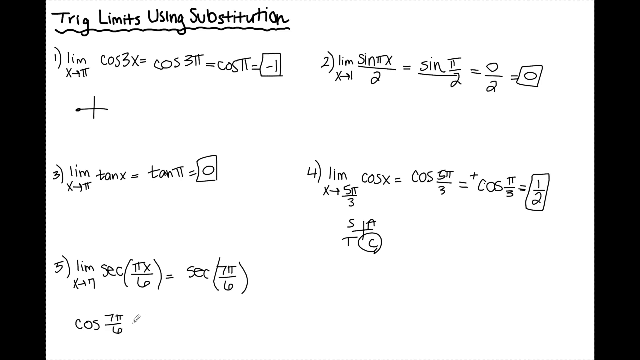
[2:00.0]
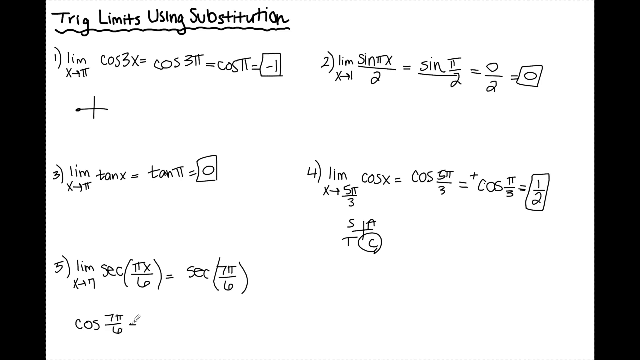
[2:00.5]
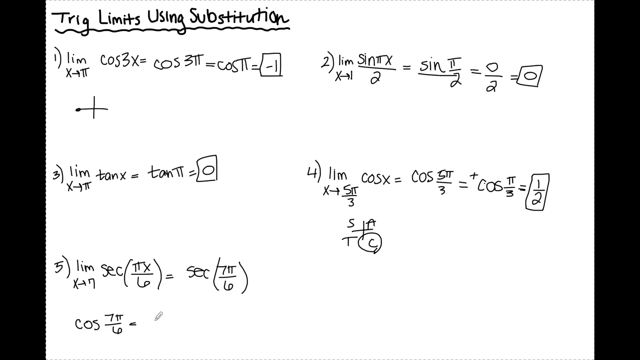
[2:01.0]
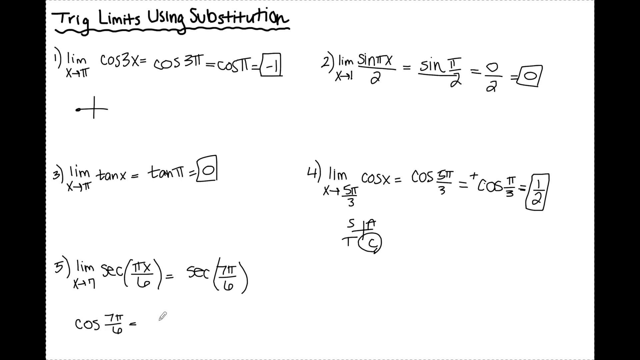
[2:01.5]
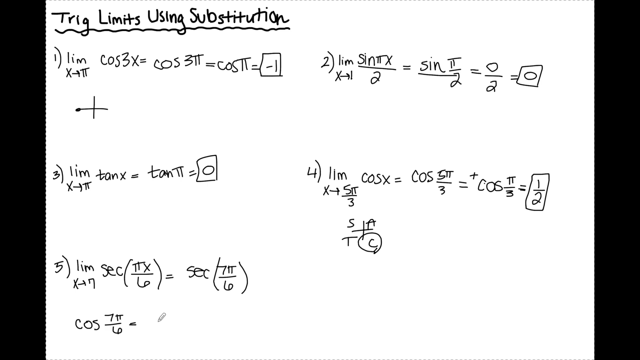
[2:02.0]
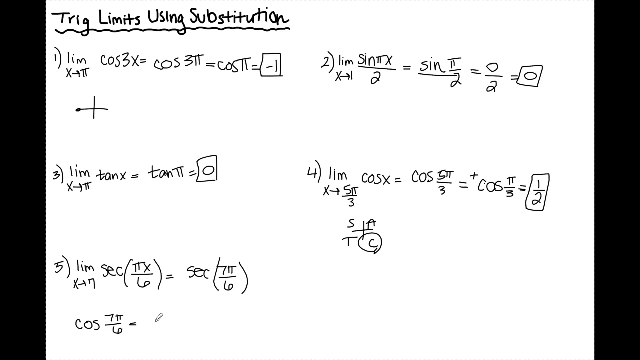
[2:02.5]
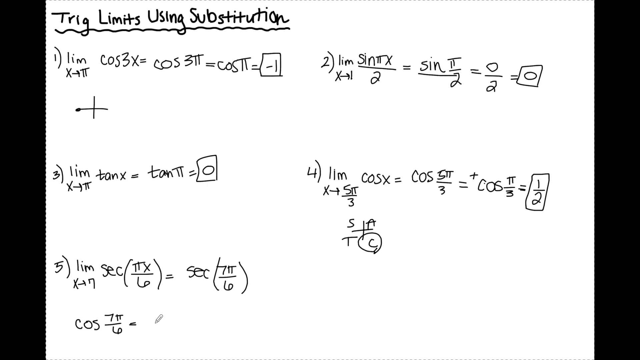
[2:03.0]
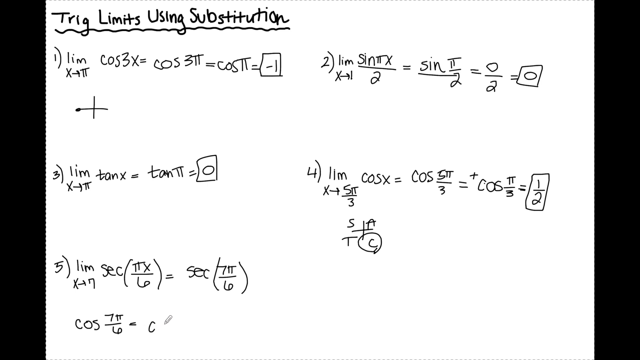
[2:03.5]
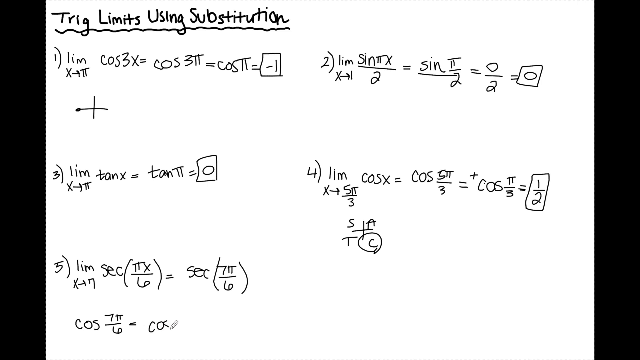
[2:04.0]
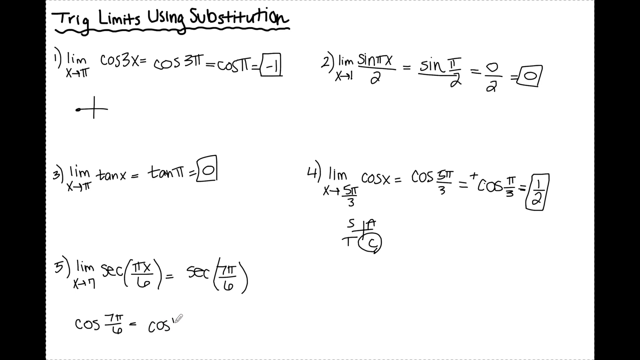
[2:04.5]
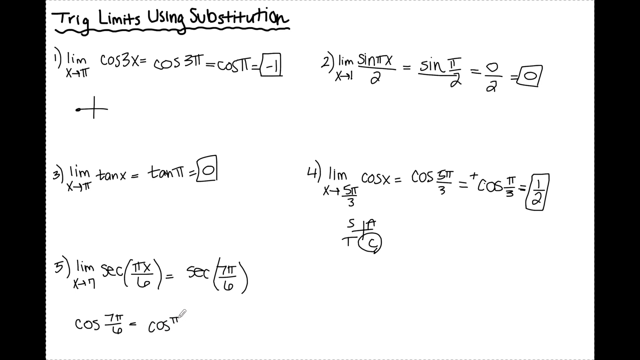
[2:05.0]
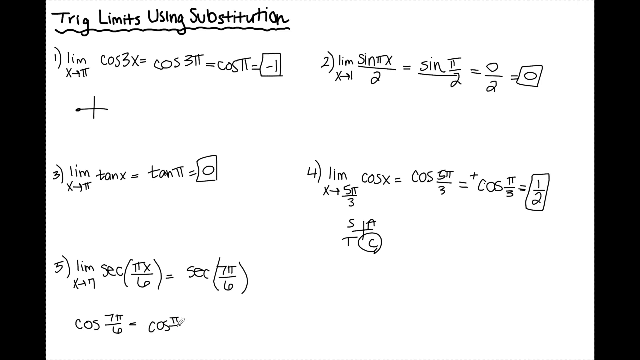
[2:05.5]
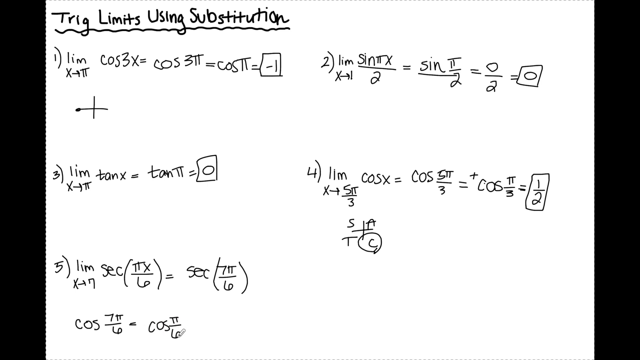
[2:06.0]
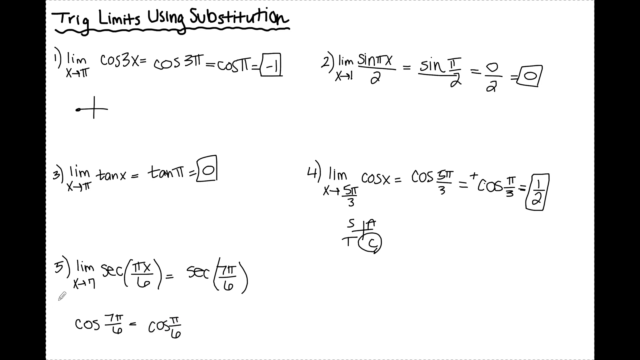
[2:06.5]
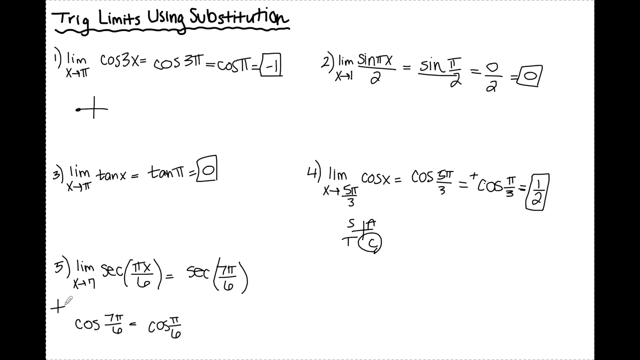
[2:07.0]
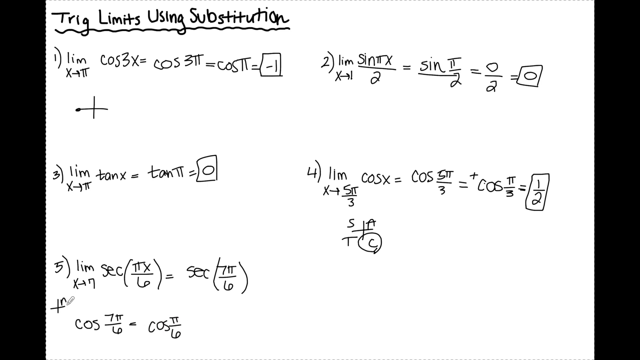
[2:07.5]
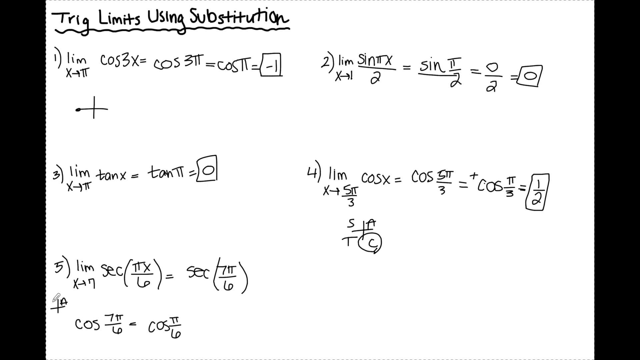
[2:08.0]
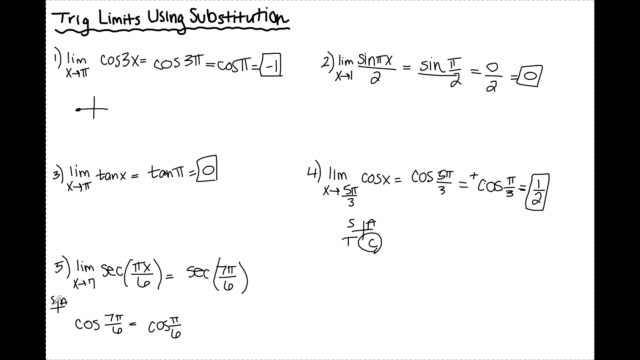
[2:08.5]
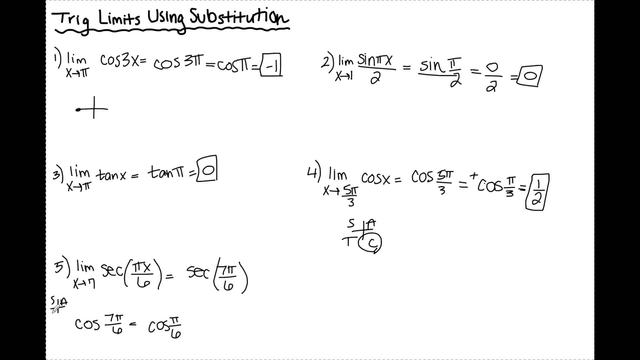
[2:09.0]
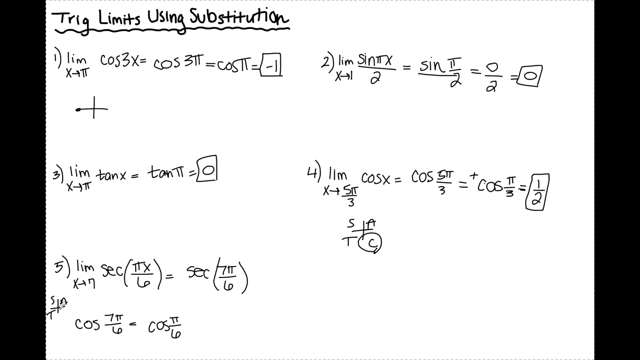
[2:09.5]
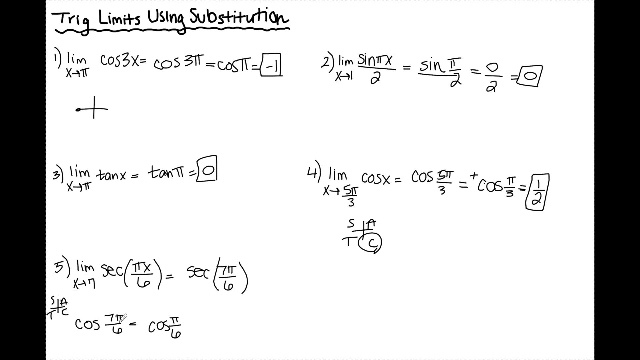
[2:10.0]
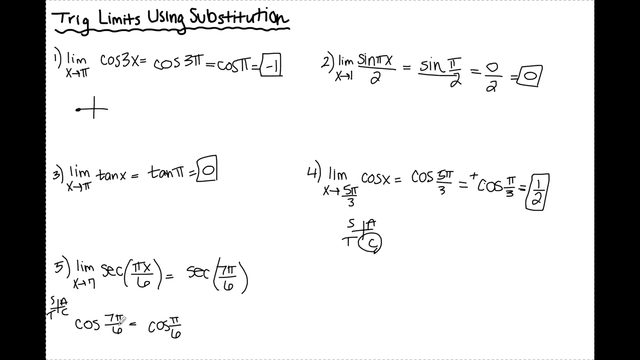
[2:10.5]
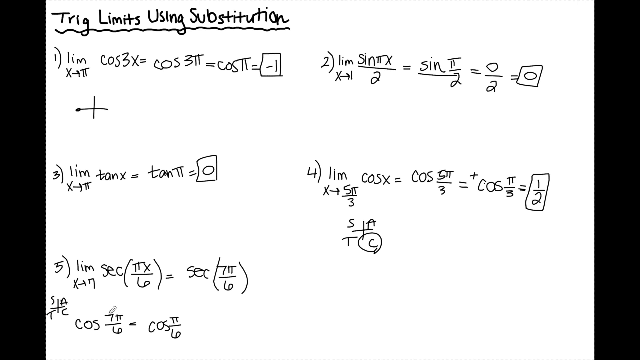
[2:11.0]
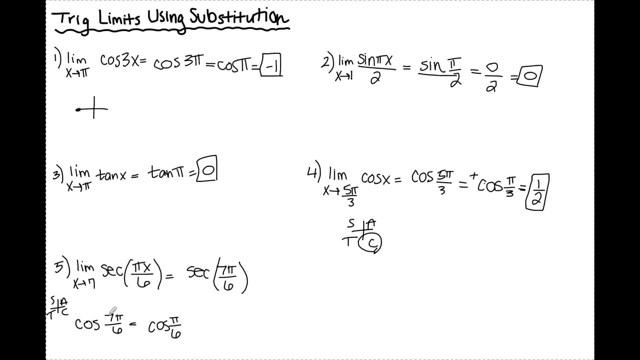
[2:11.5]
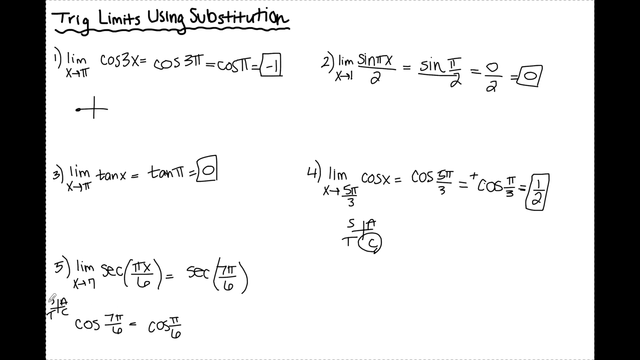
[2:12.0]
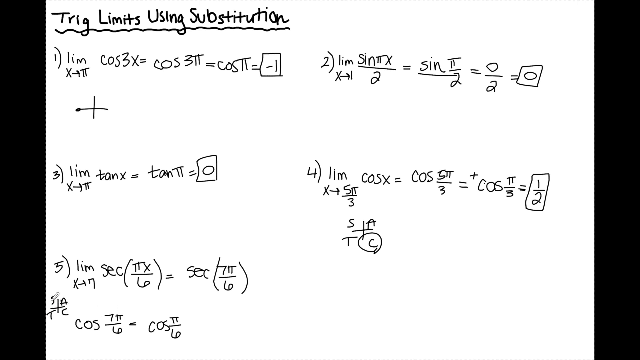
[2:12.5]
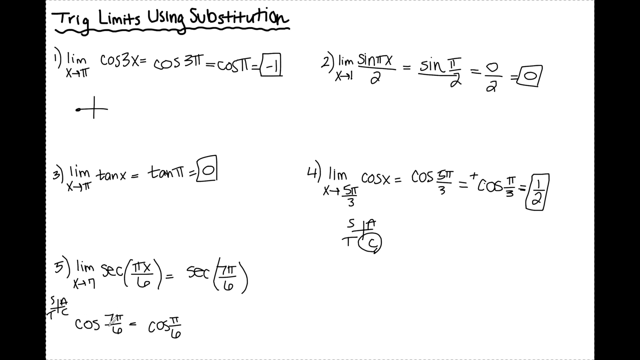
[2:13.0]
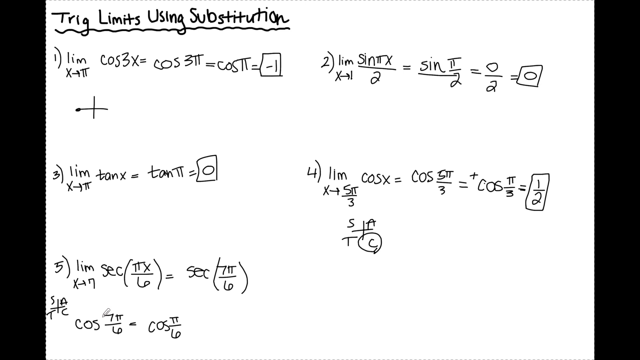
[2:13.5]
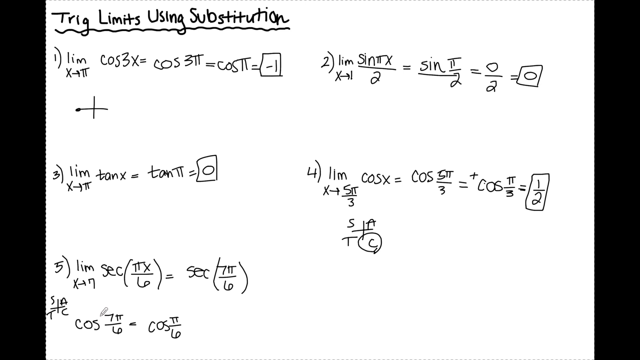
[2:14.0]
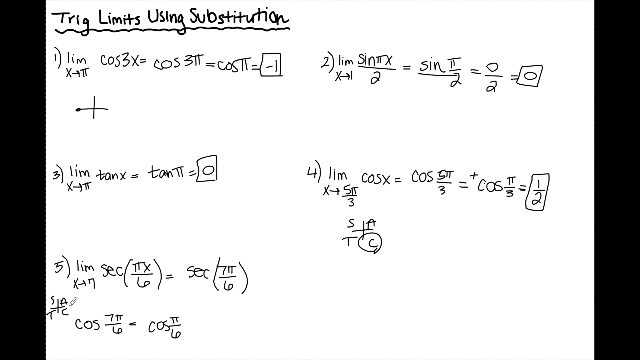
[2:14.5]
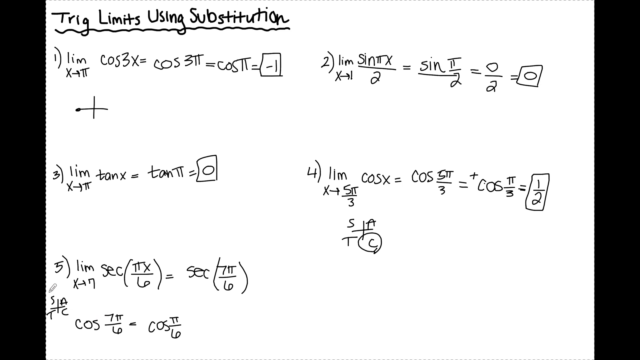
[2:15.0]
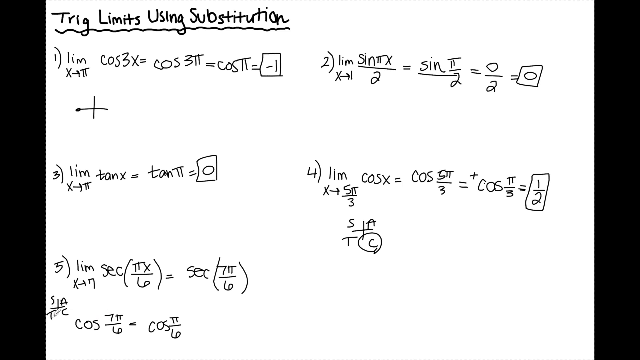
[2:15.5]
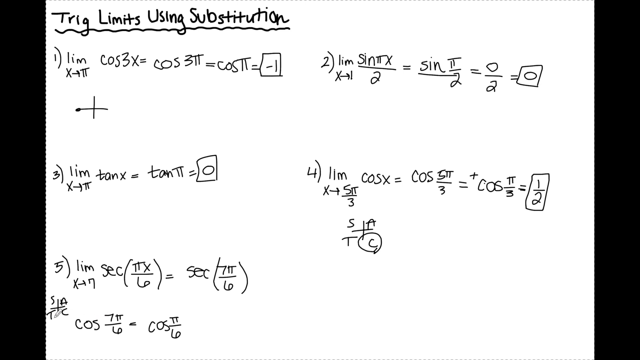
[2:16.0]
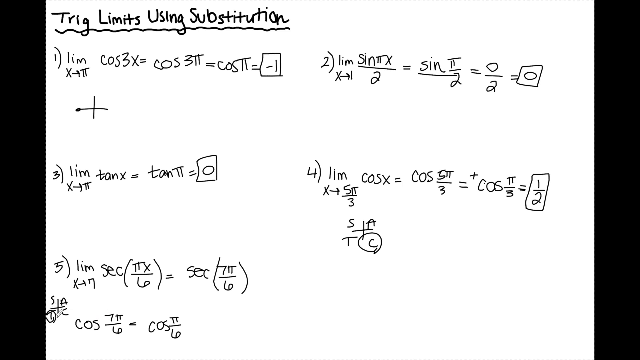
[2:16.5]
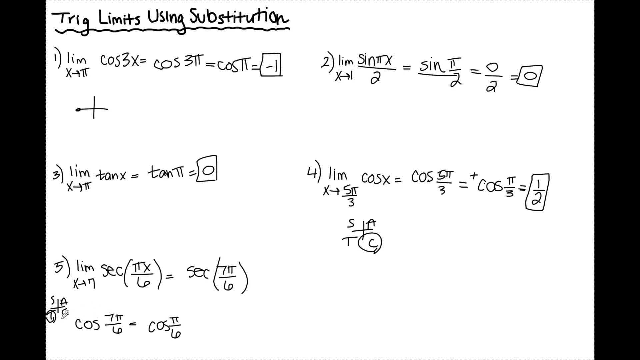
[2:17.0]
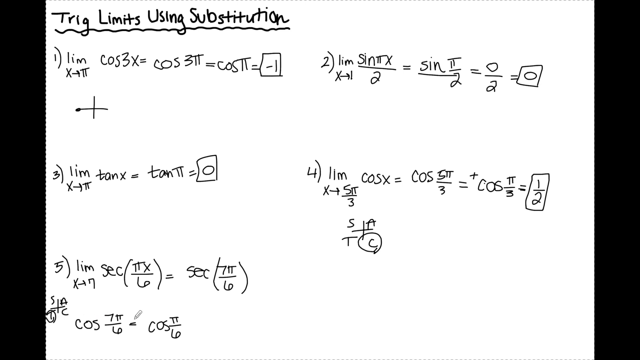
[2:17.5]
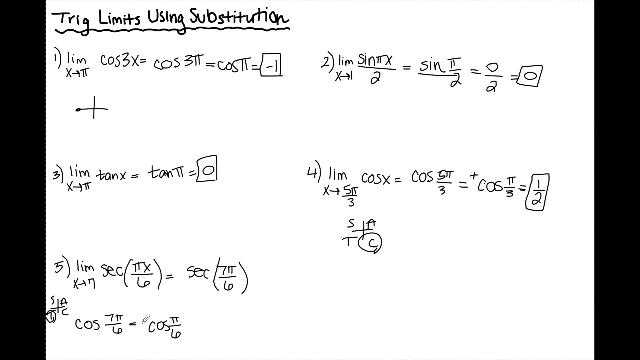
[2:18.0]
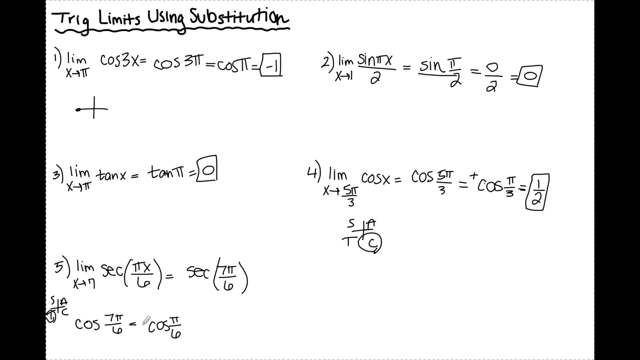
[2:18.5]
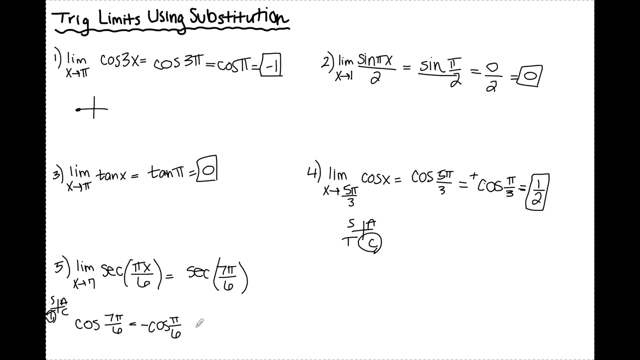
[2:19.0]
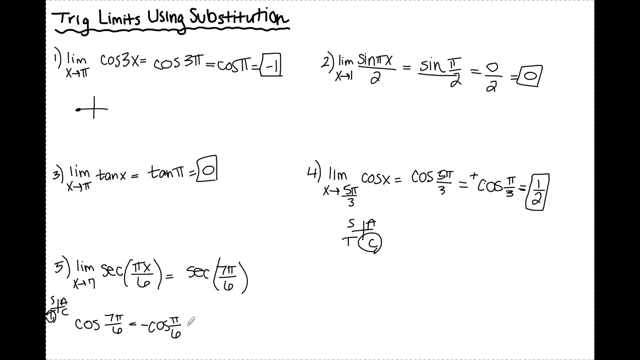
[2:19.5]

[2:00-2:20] After the equals sign following cosine 7 pi divided by 6, the cursor writes cosine pi divided by 6. It moves back up to the front of the equation and draws another cross with four quadrants, putting A in one, T in another, S in the next, and C in the last. It moves back and forth between the equation and the quadrants, circles the top left quadrant S, hovers around the S, and then moves down and circles the bottom left quadrant T. Moving back to the equation, it goes past the equals sign on the simplified equation and puts a minus sign in front of the cosine. It then moves to the end of the equation and begins writing another equals sign.